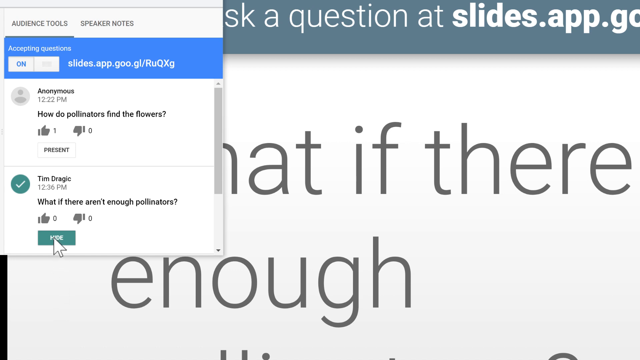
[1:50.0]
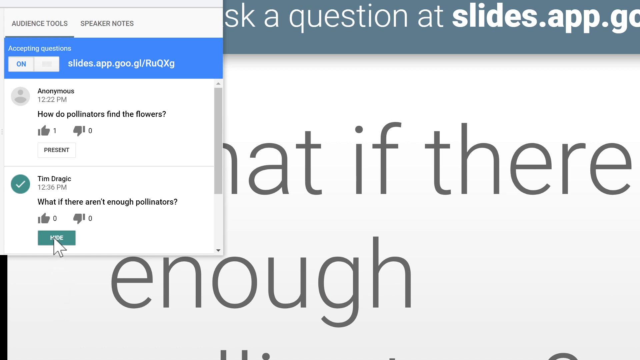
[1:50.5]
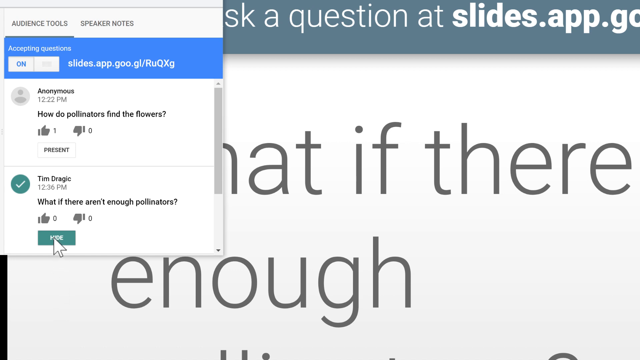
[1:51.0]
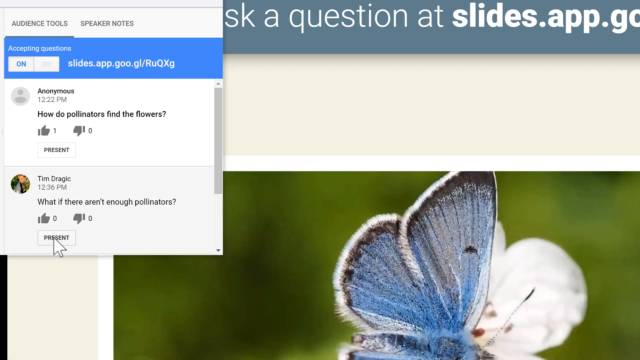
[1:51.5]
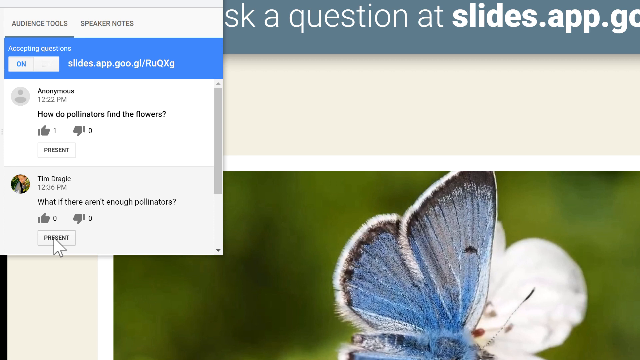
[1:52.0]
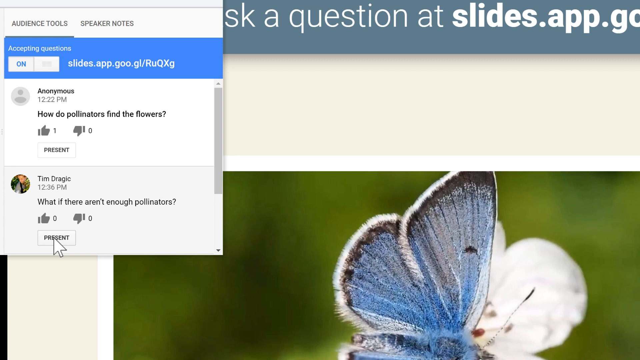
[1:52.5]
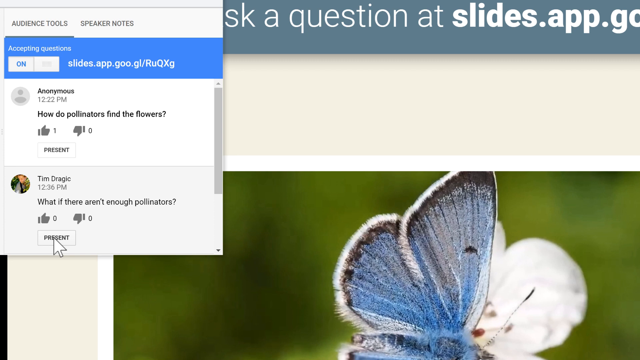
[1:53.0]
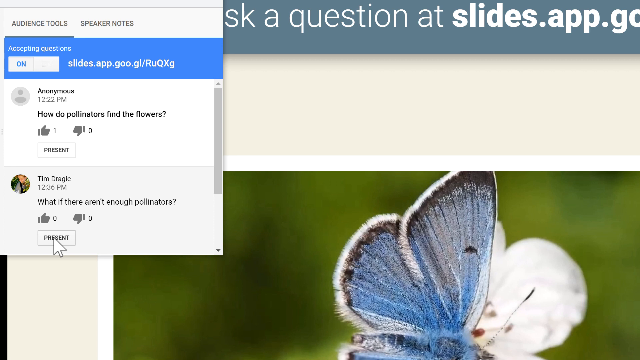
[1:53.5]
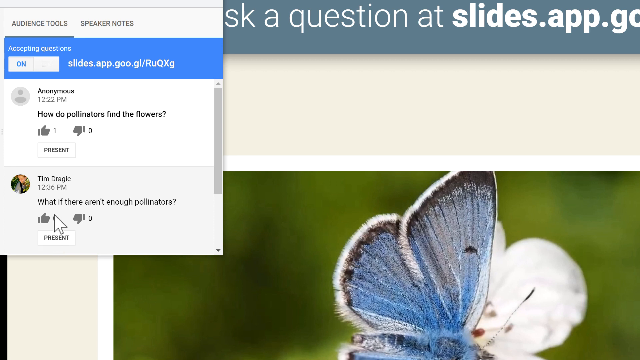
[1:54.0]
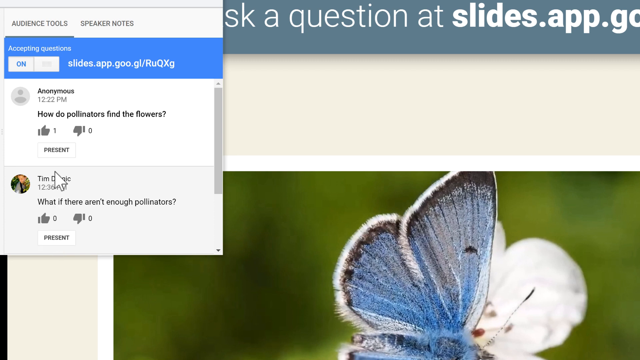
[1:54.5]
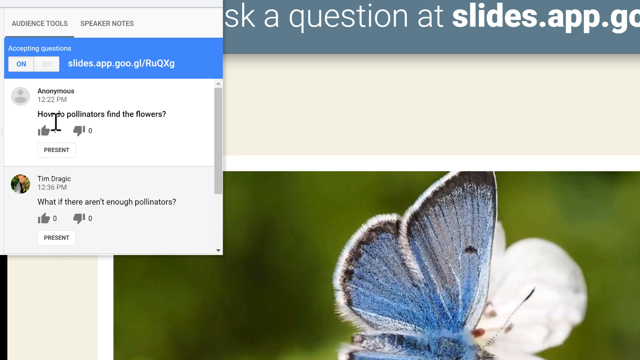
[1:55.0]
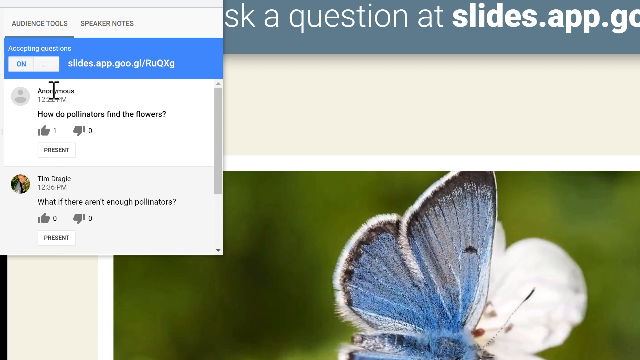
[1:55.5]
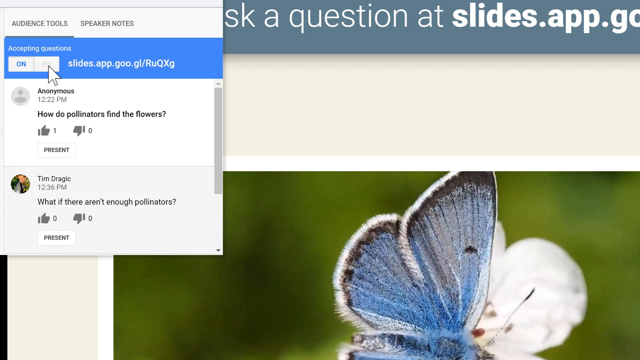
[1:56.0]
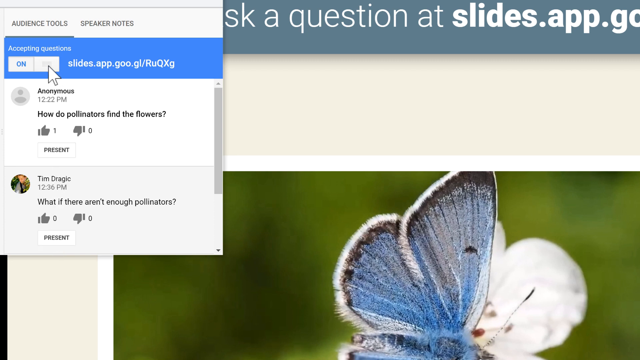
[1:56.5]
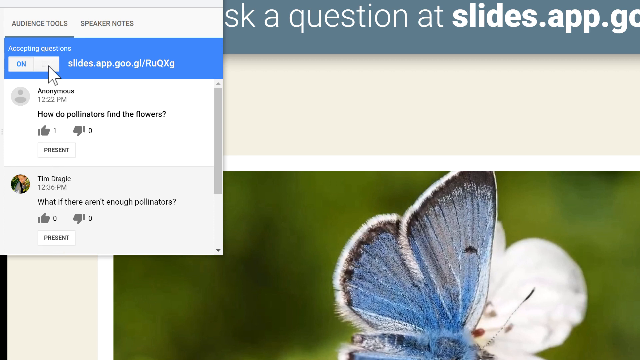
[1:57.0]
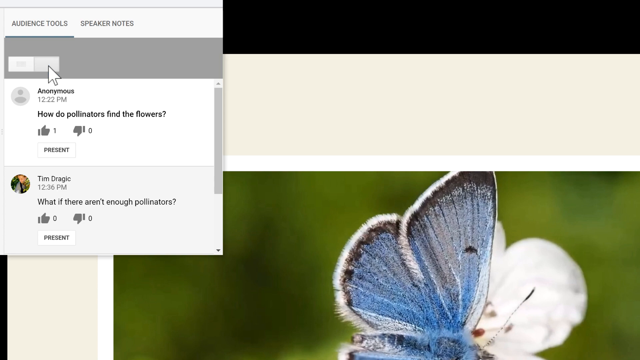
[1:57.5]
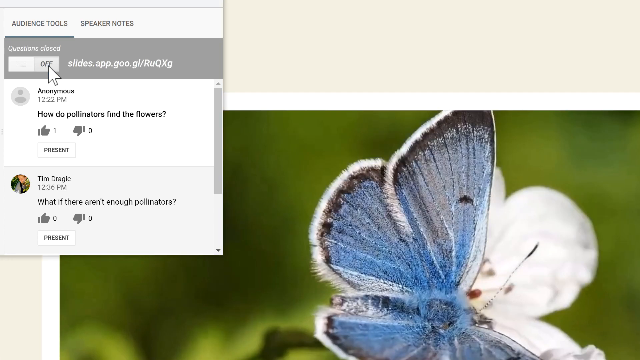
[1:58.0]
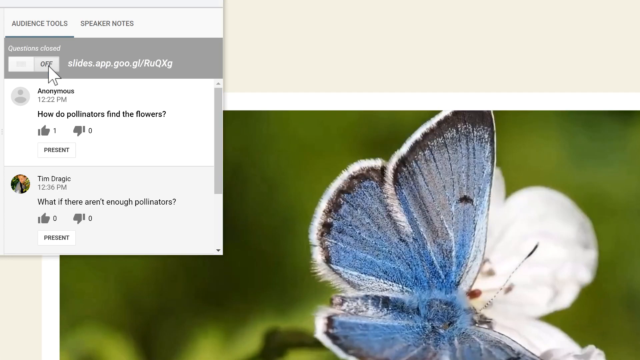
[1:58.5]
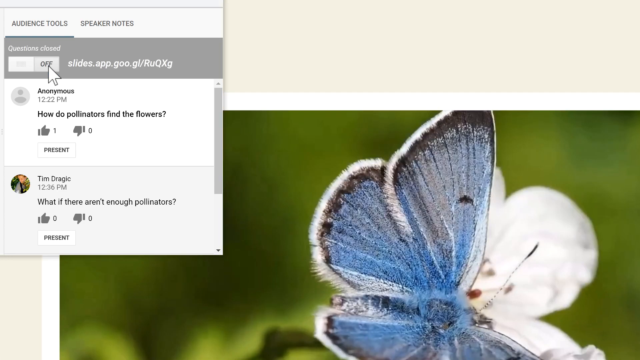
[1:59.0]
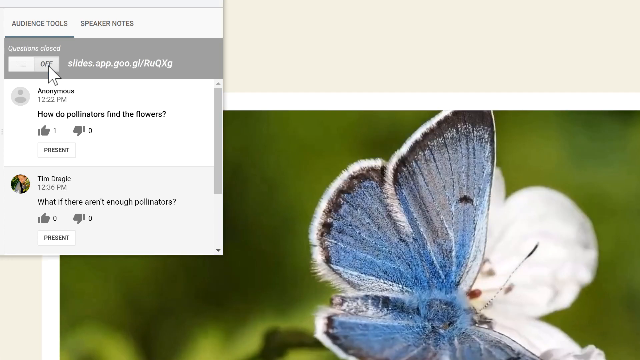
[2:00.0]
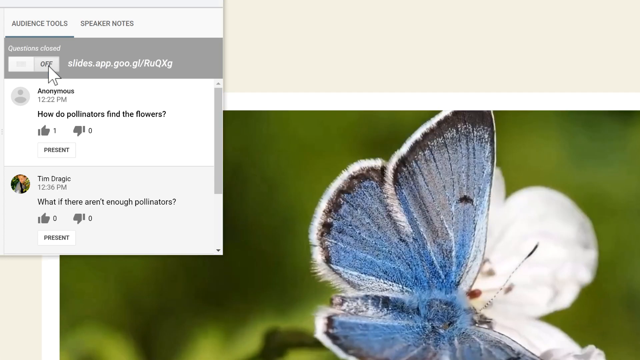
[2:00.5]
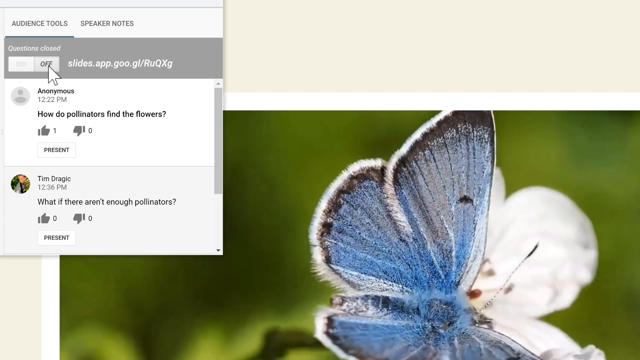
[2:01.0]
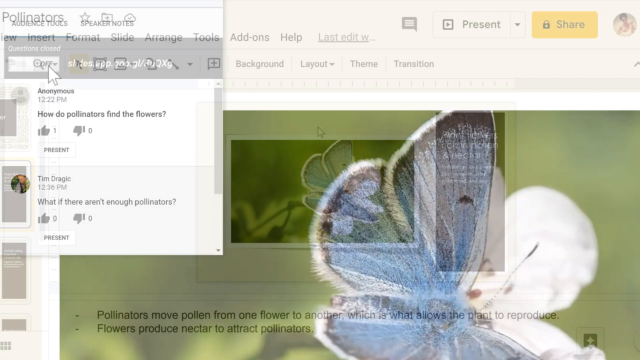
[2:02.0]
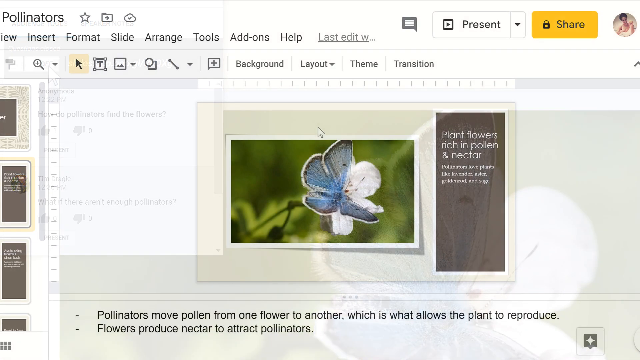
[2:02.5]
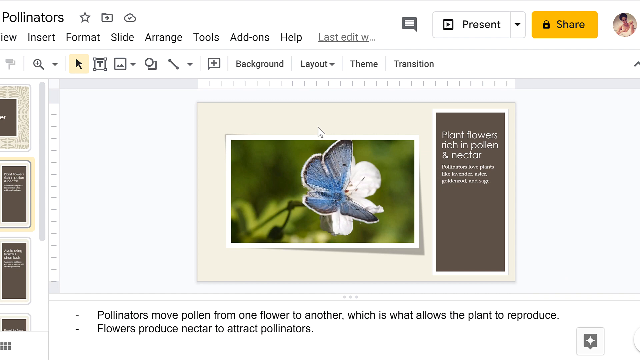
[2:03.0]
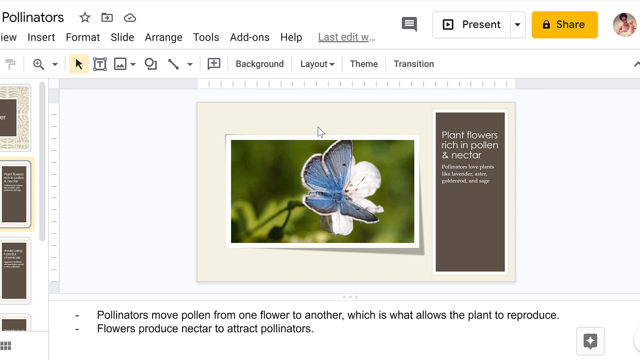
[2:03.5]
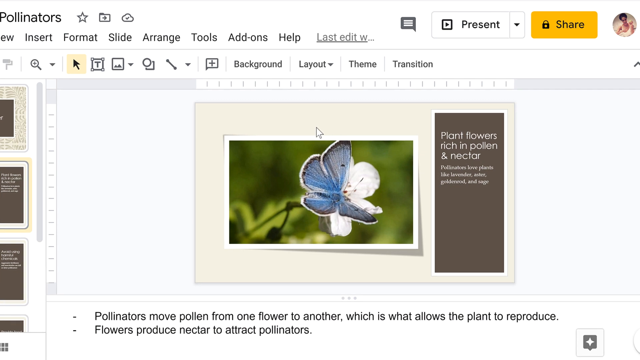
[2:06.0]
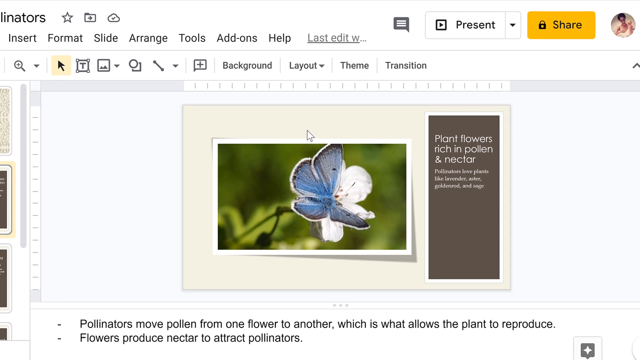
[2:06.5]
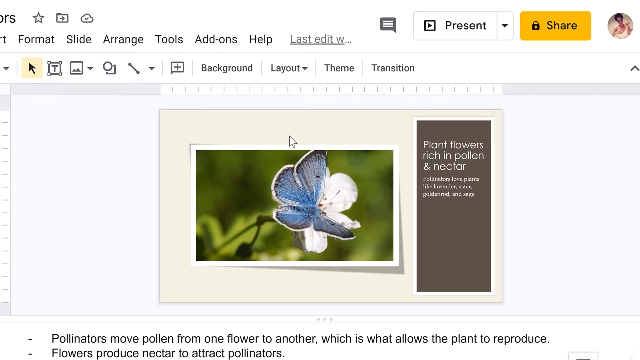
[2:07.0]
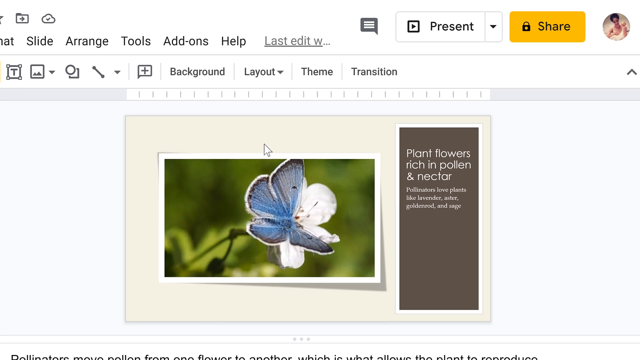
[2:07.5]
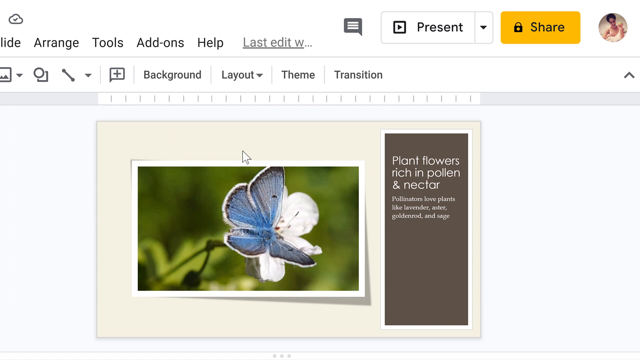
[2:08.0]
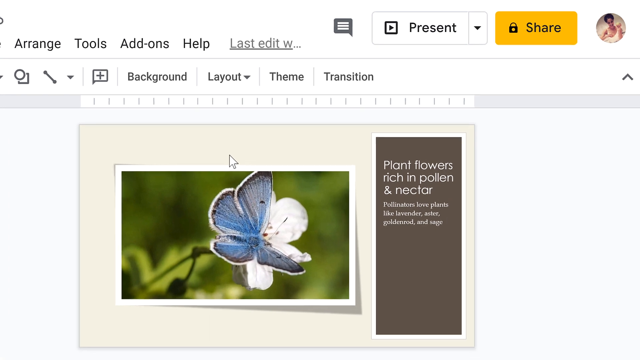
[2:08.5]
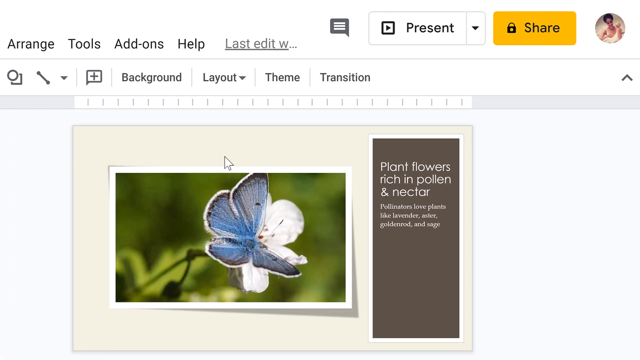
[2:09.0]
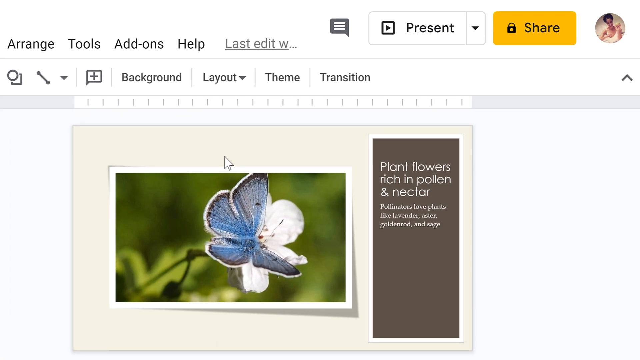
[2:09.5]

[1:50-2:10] The presentation slide is shown with a dialog box open in the top left corner and a butterfly image in the background. In the dialog box audience tool is selected, and below it is a small rectangular banner with a blue background containing an on/off toggle button and the heading "accepting questions", followed by the link slides.app.goo.gl/Ruqxg. The toggle is on, and two questions are visible below. The cursor moves upward and clicks the off button, and the heading in the blue banner changes to "questions closed". In the background, the banner at the top of the slide that said "ask a question" disappears. The whole presentation screen with the headings, home menu and so on is shown. The top left of the screen is zoomed in, and the mouse pointer moves toward the paragraph in the background.